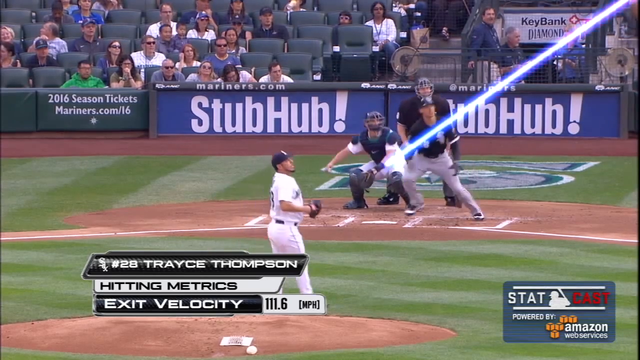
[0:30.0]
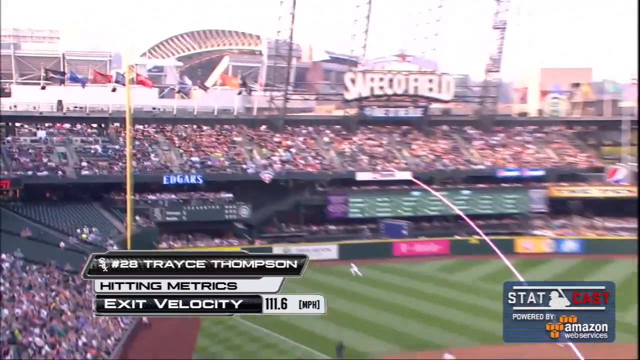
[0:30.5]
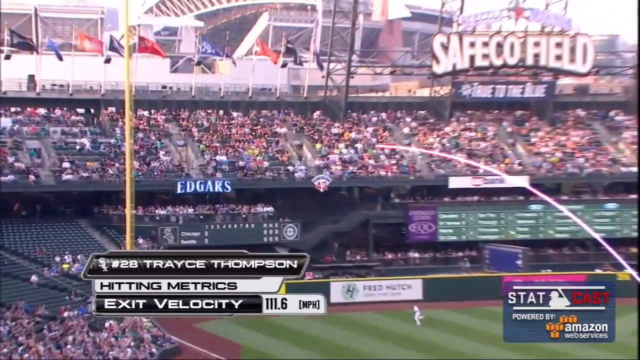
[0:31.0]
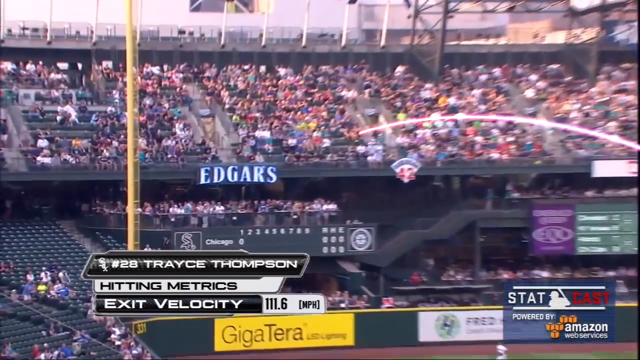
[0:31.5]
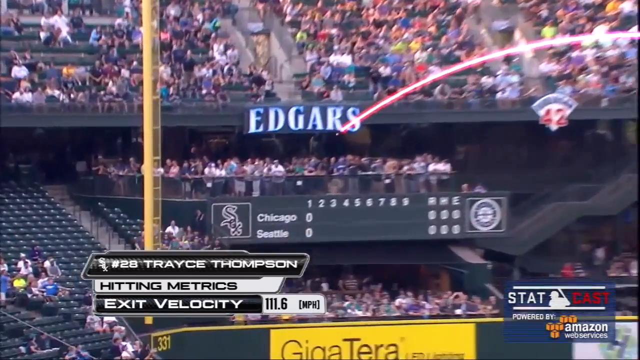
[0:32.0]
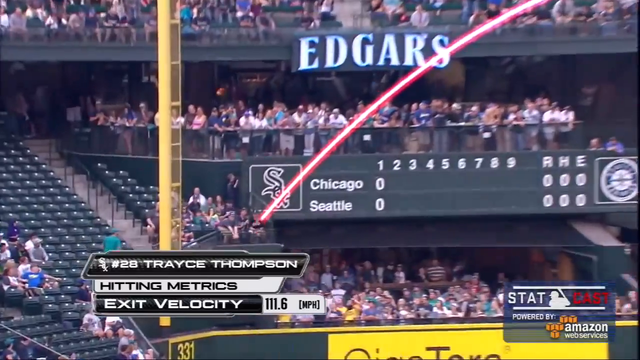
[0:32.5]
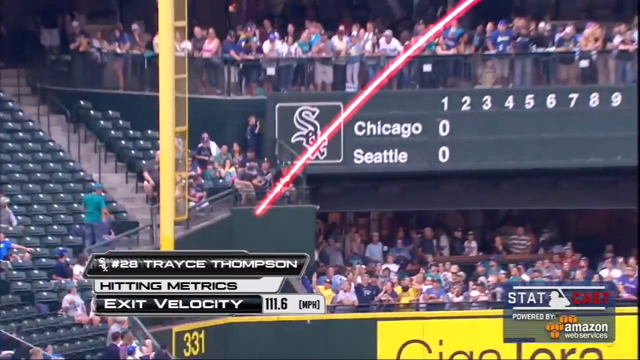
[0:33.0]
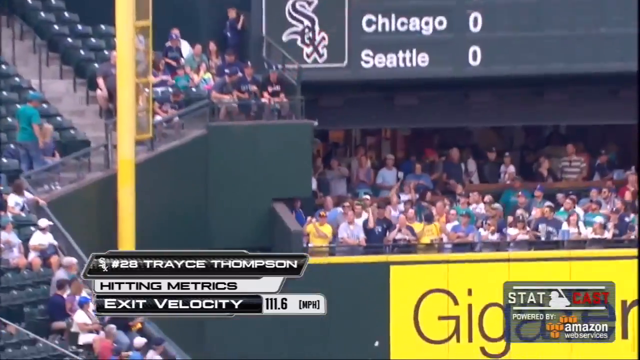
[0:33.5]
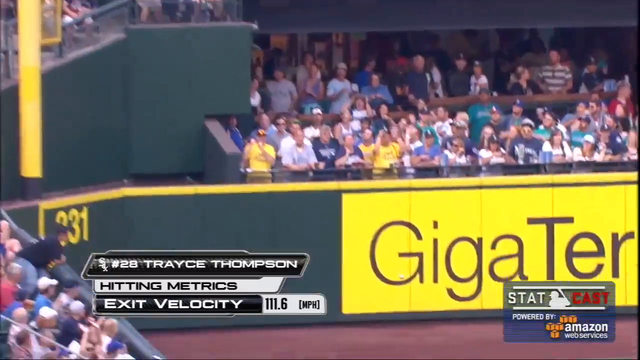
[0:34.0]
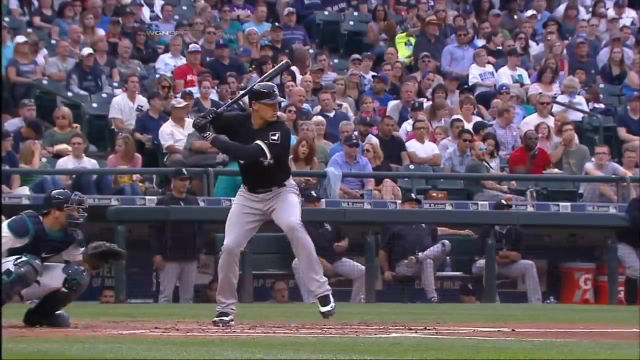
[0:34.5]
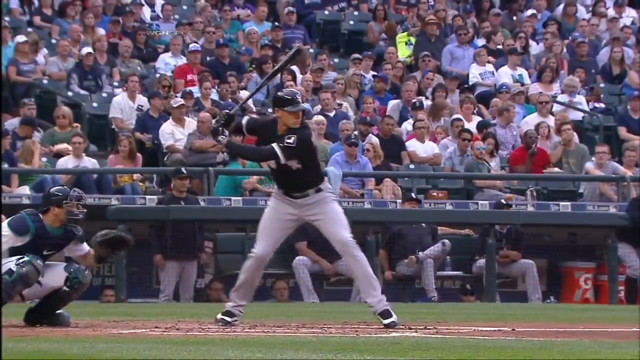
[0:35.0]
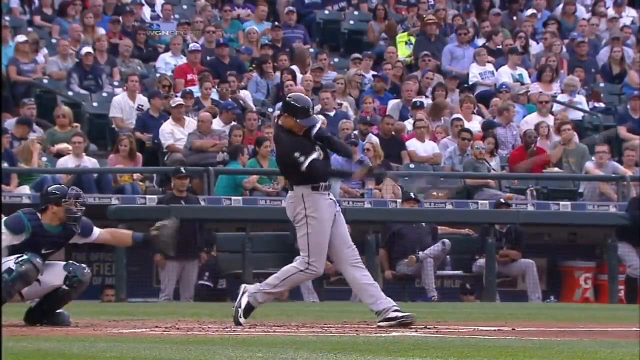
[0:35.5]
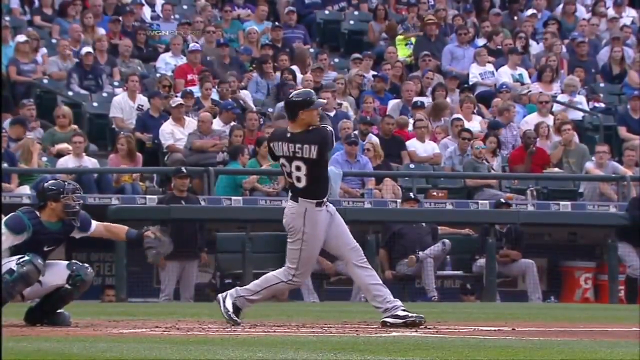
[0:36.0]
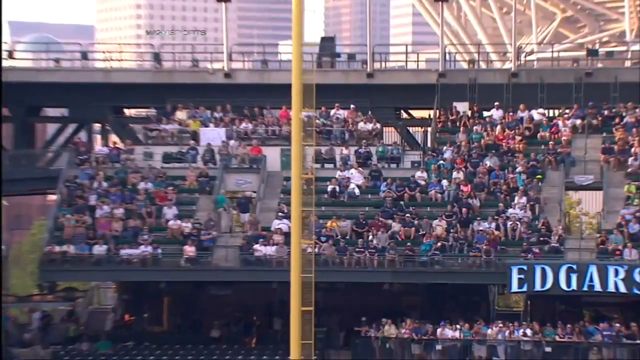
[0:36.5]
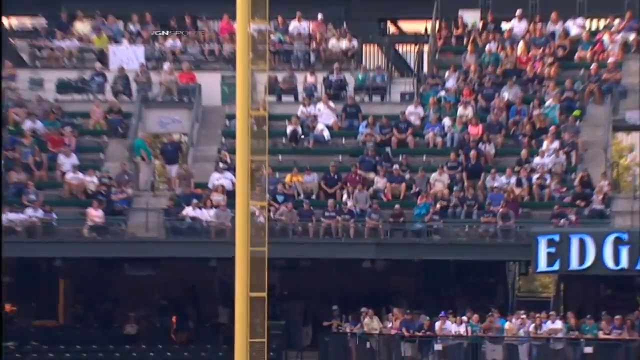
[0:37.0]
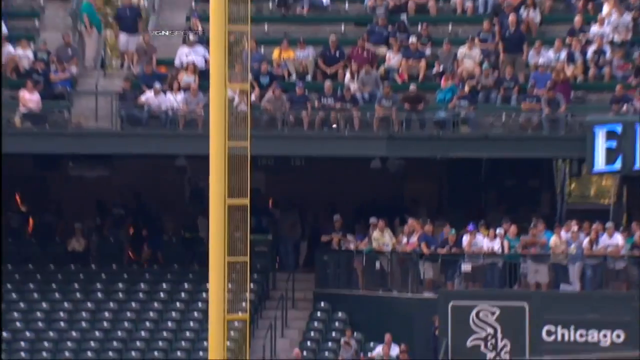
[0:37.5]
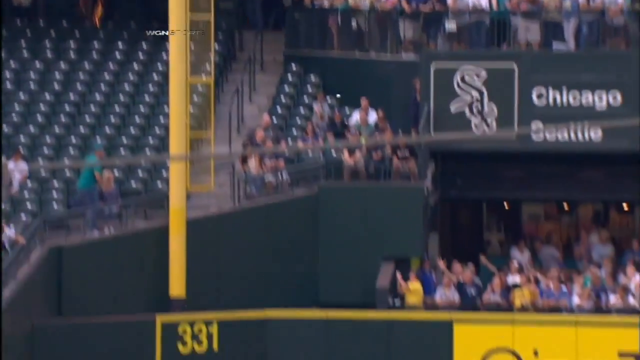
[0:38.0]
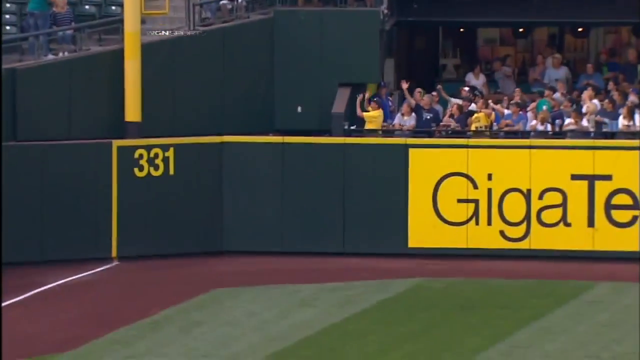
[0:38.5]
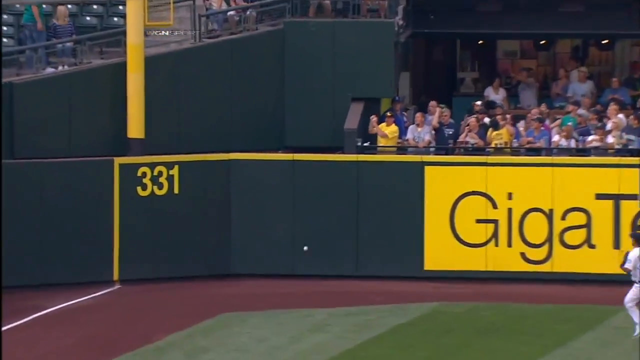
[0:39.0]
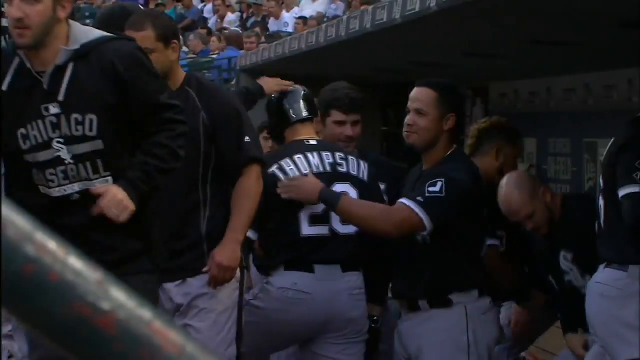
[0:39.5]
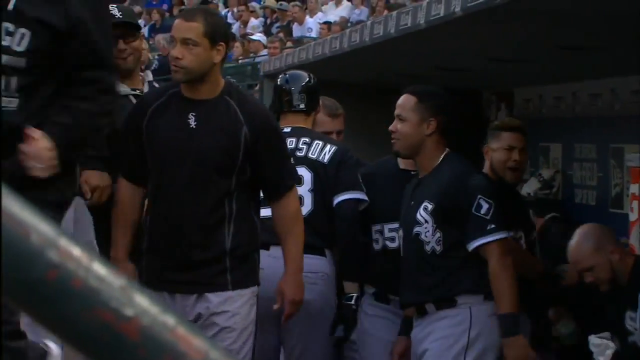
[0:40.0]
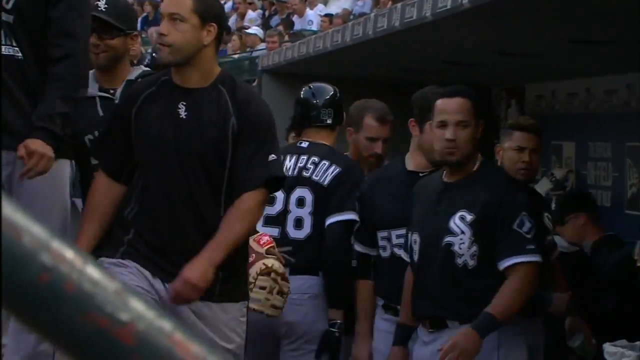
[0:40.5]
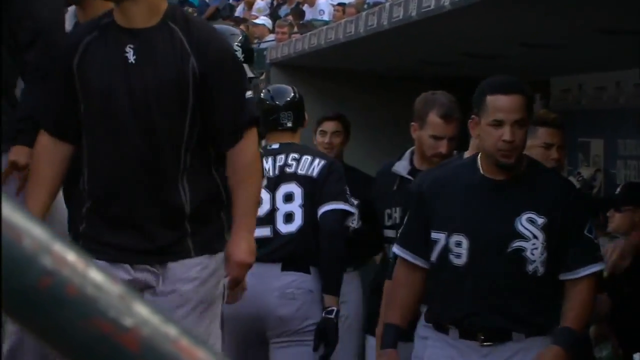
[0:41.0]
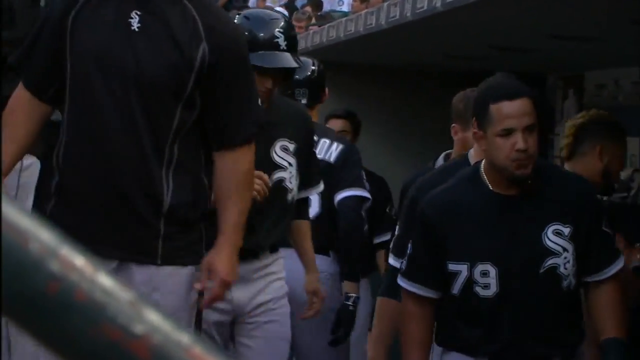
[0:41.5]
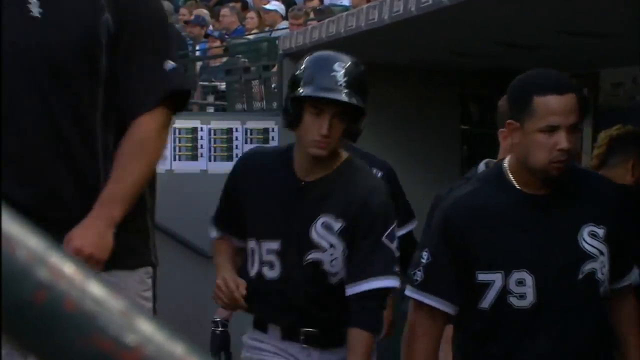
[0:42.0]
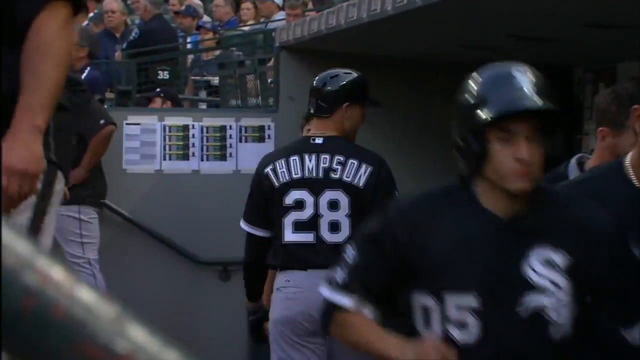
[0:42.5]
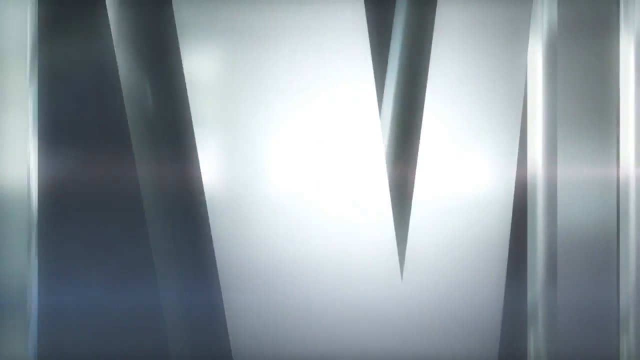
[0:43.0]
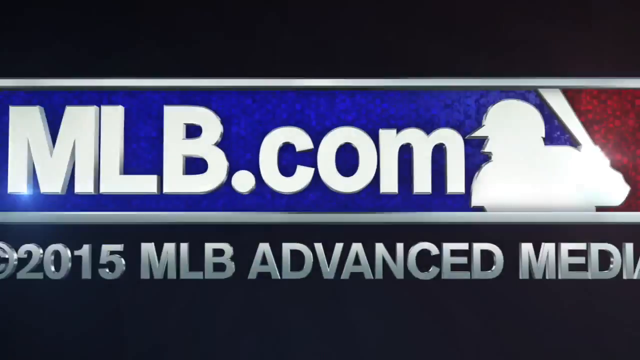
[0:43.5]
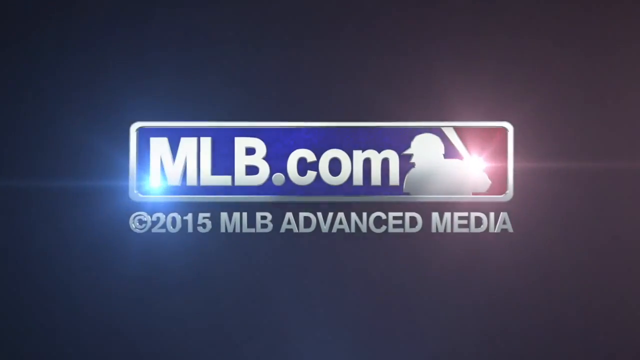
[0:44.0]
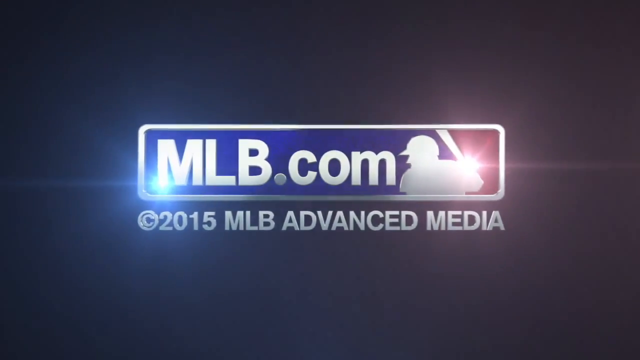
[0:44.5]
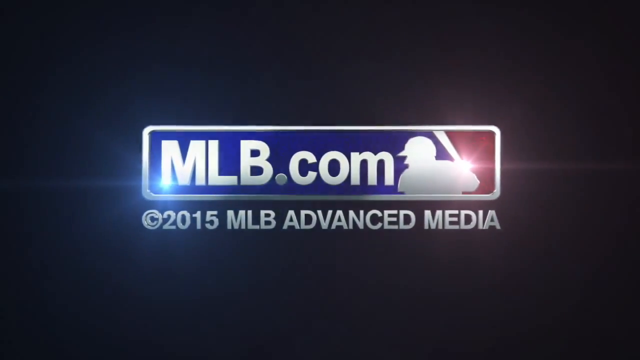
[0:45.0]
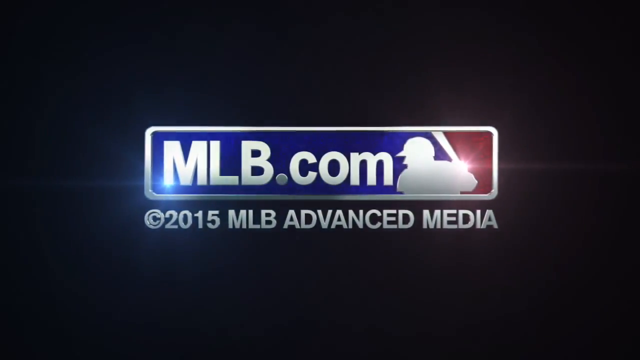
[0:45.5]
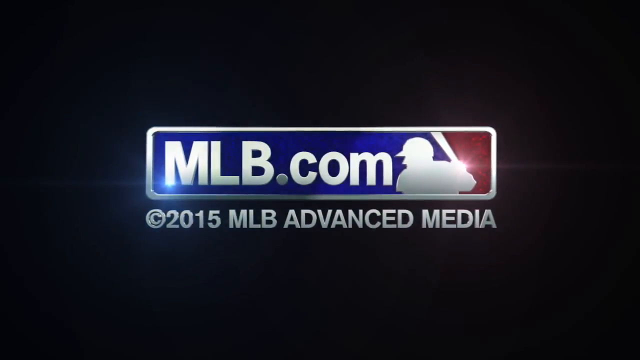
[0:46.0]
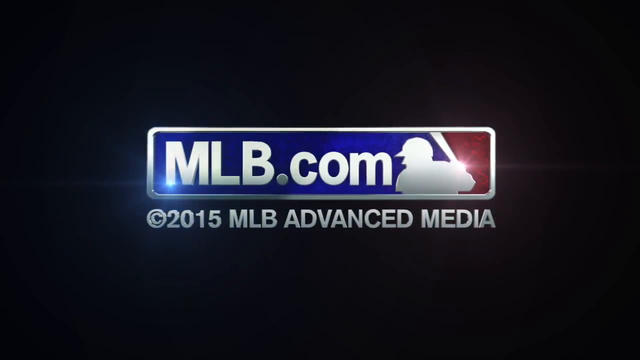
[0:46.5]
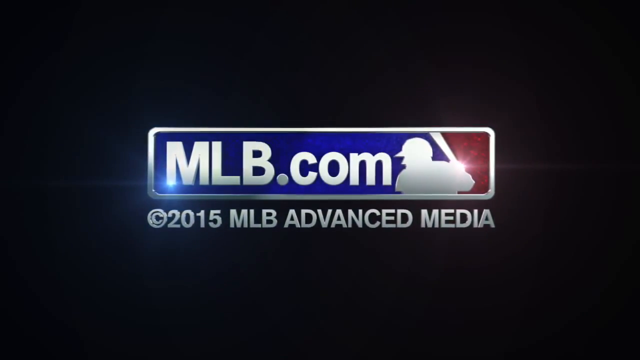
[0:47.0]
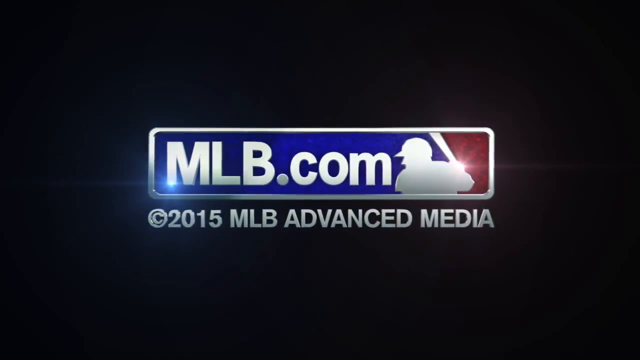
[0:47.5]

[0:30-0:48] The video begins by showing the trajectory of the ball just hit for a home run by Trayce Thompson, with a white line tracing its path from where he hit it all the way to the stands. The pitcher watches the ball go into the stands, and the catcher and the batter watch it as well. In the background are the words "mariners.com" and "2016 season tickets mariners.com." Nobody in the stands claps for the home run, suggesting this is the Seattle Mariners' home field and that the batter is with the White Sox. Near the end, a replay shows him hitting the home run, and then he goes to the dugout, where everyone congratulates him. At the very end, the MLB.com logo for Major League Baseball appears.